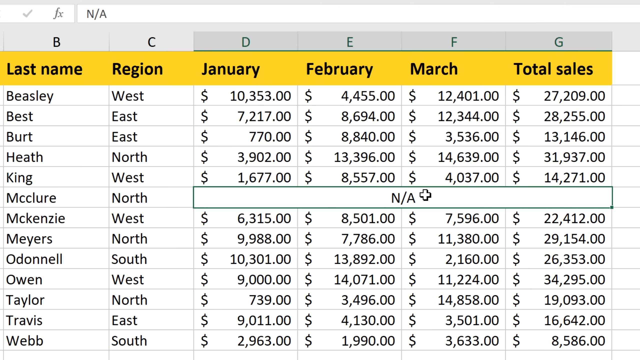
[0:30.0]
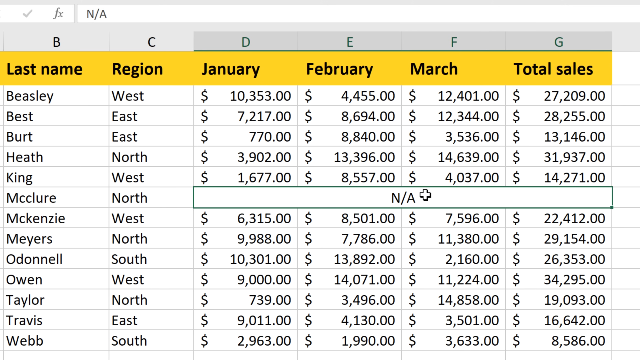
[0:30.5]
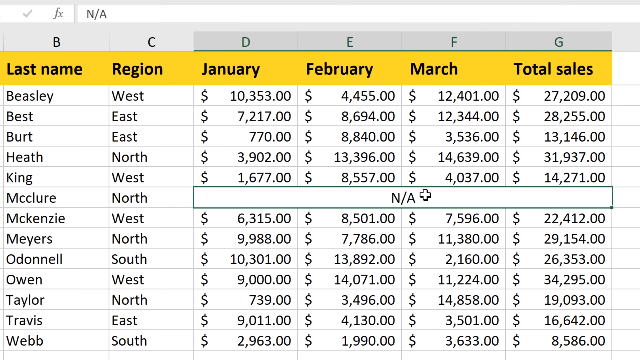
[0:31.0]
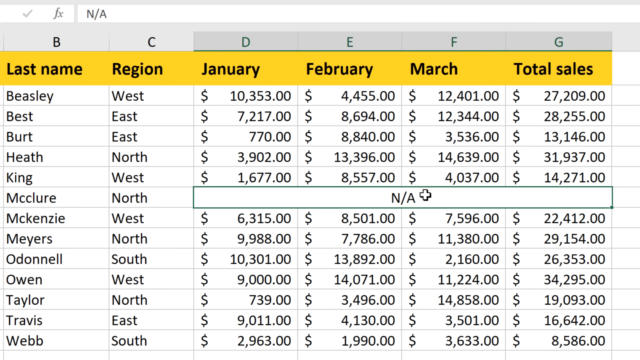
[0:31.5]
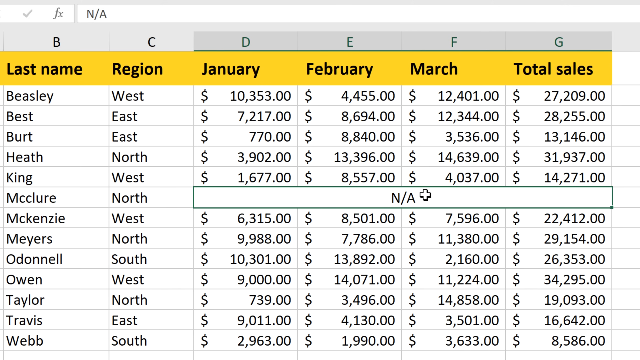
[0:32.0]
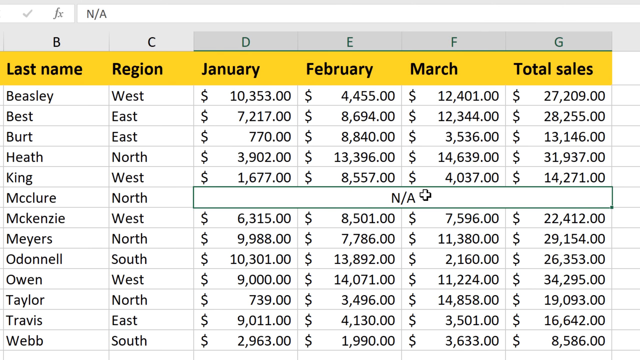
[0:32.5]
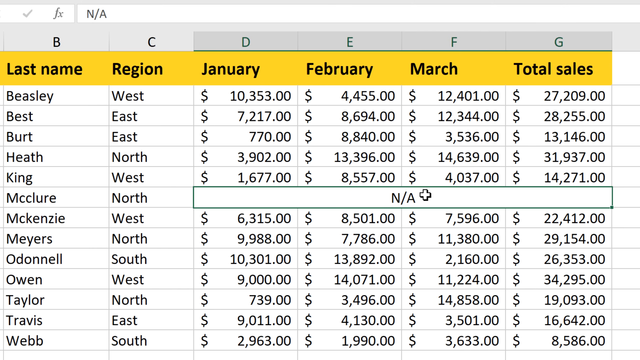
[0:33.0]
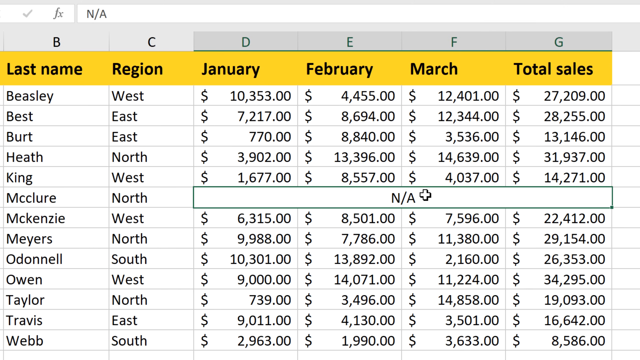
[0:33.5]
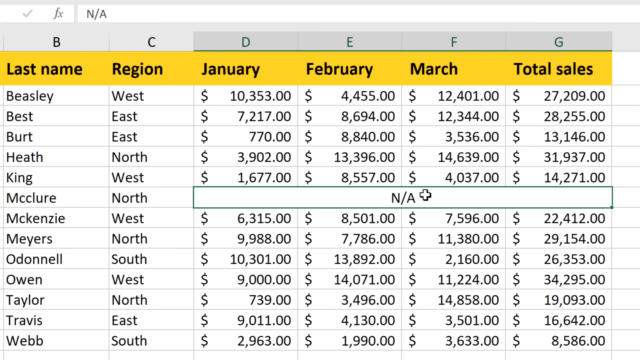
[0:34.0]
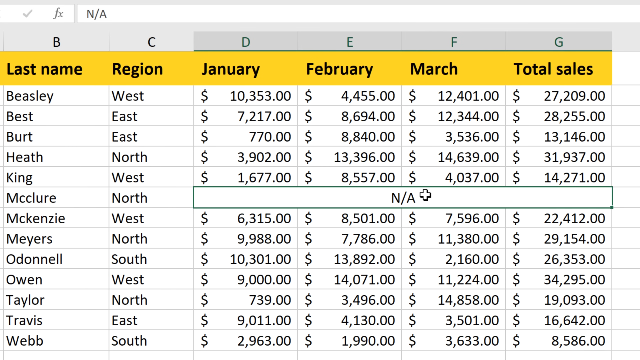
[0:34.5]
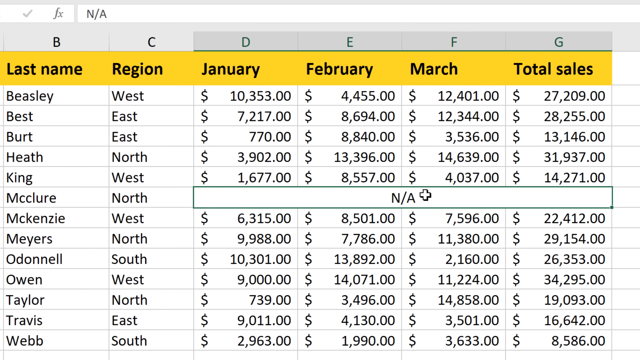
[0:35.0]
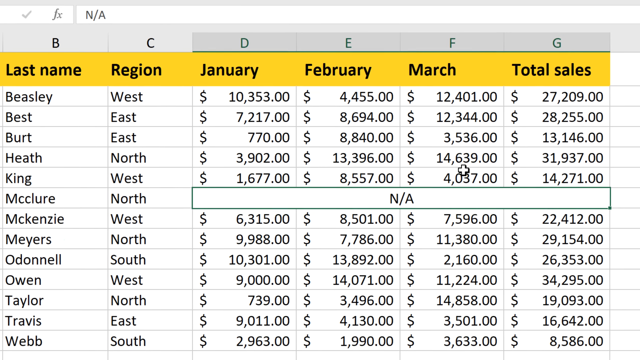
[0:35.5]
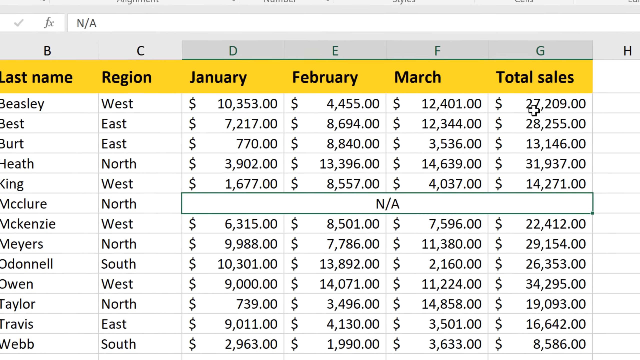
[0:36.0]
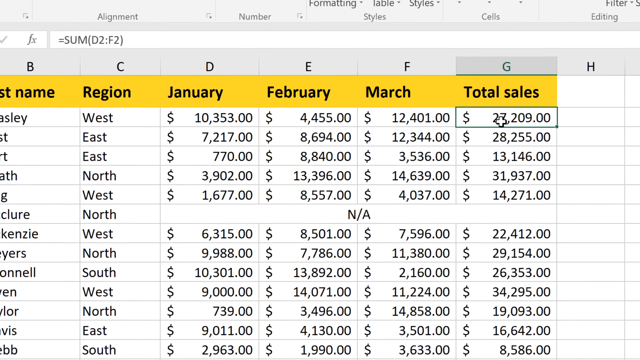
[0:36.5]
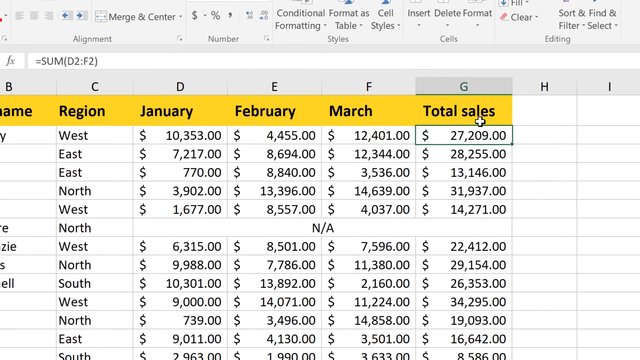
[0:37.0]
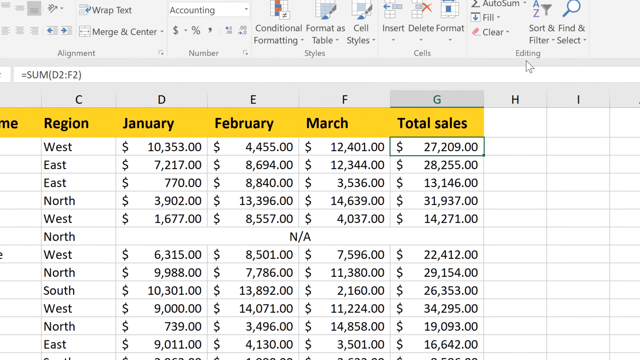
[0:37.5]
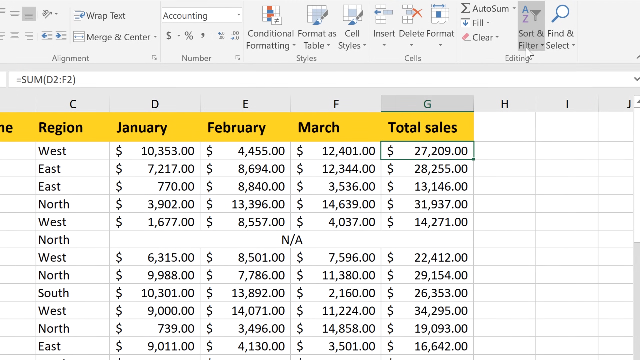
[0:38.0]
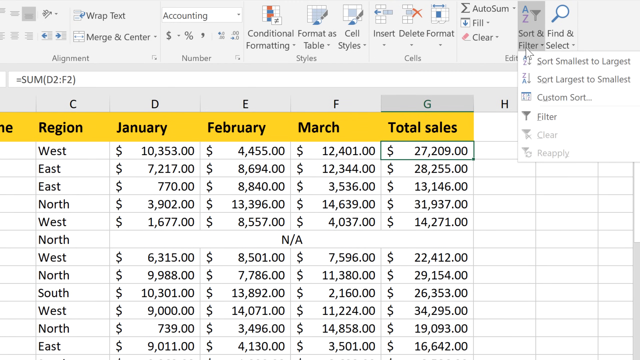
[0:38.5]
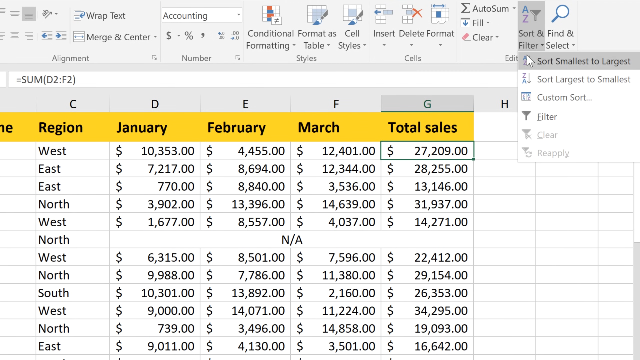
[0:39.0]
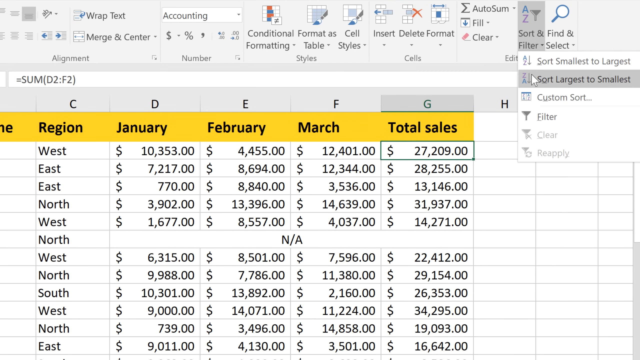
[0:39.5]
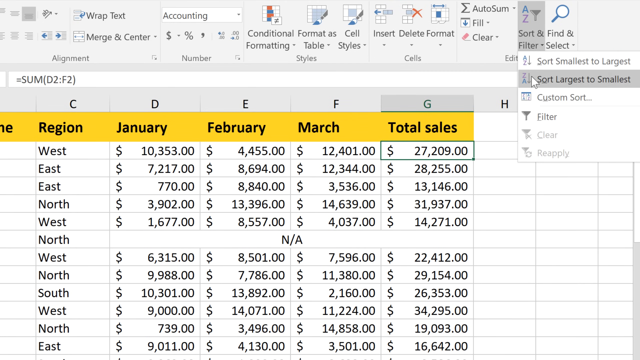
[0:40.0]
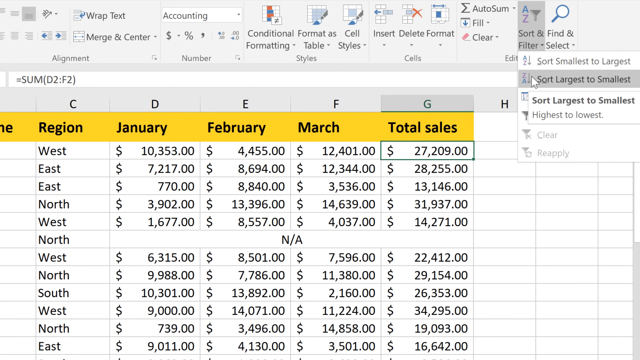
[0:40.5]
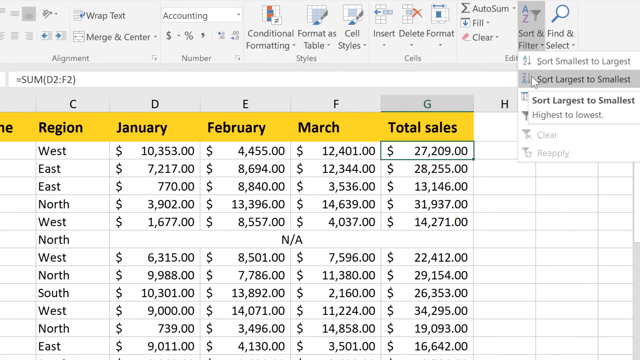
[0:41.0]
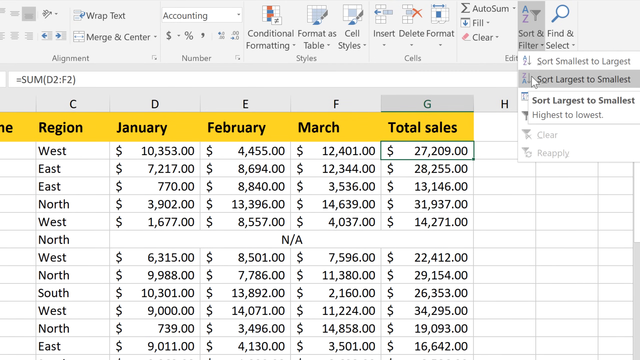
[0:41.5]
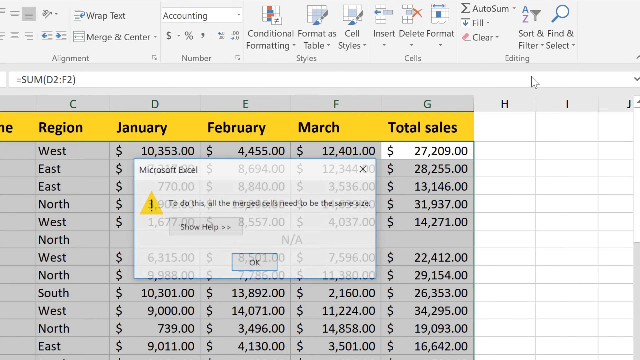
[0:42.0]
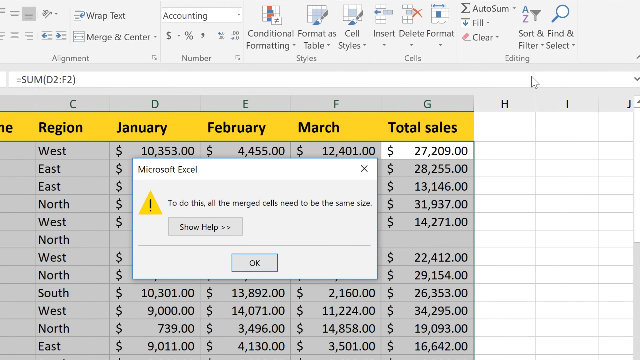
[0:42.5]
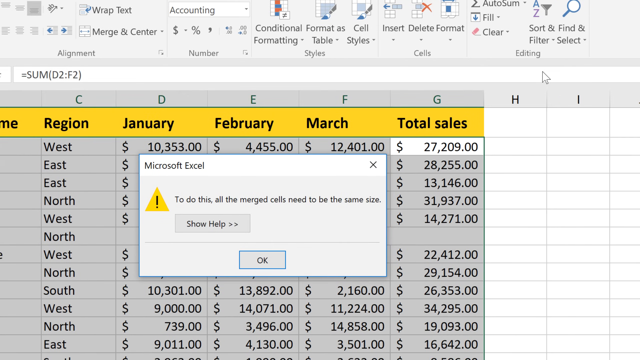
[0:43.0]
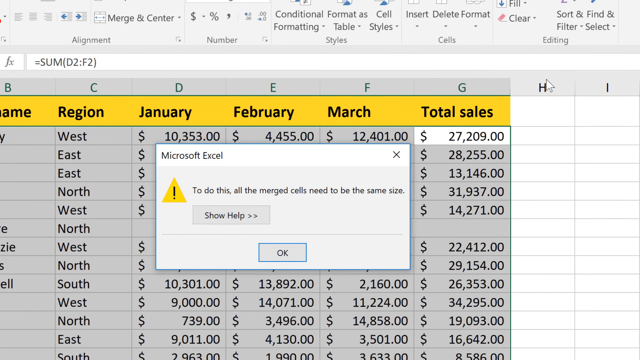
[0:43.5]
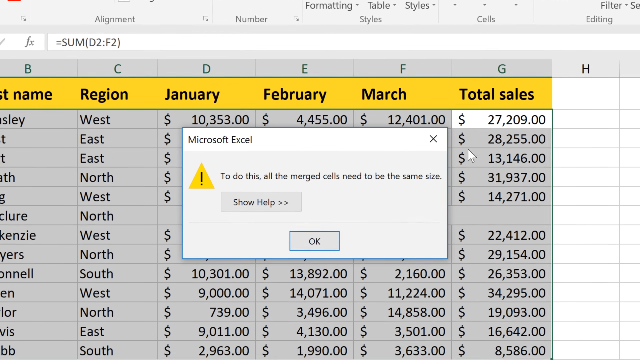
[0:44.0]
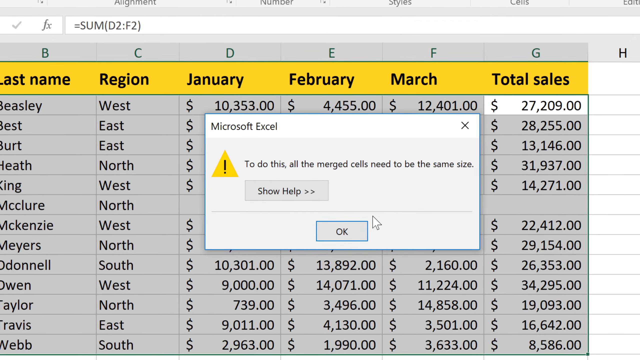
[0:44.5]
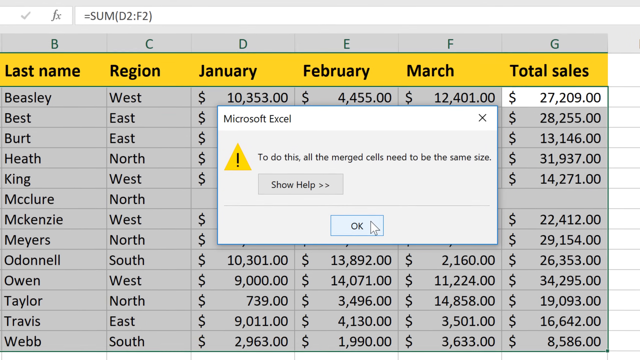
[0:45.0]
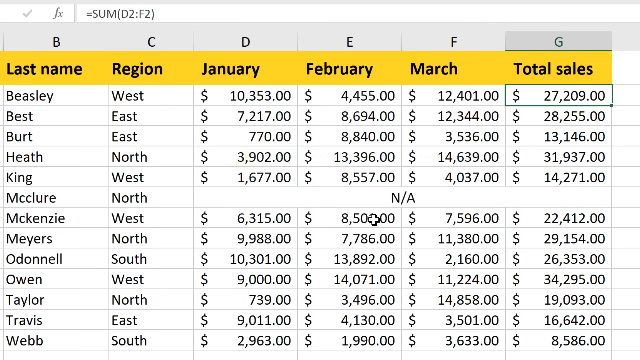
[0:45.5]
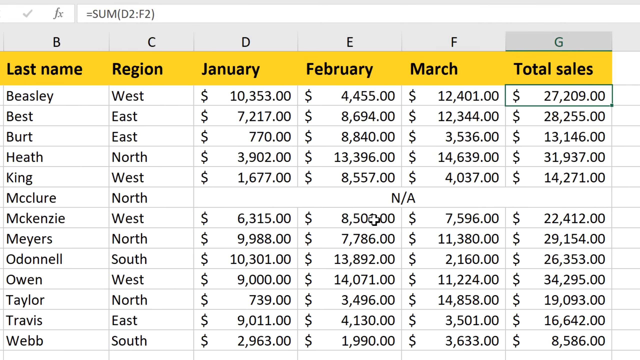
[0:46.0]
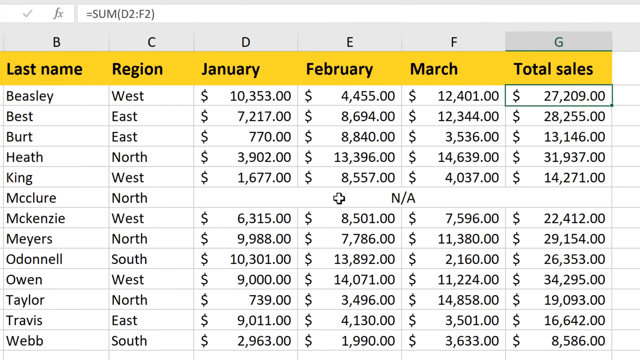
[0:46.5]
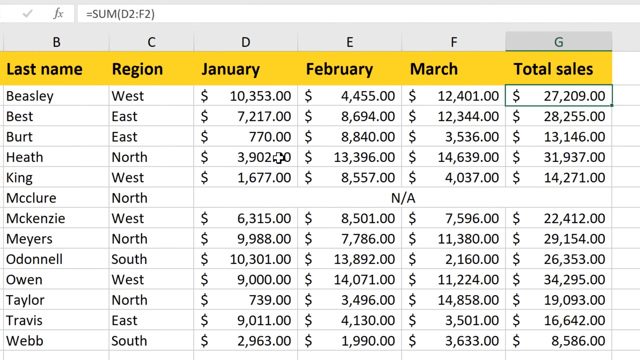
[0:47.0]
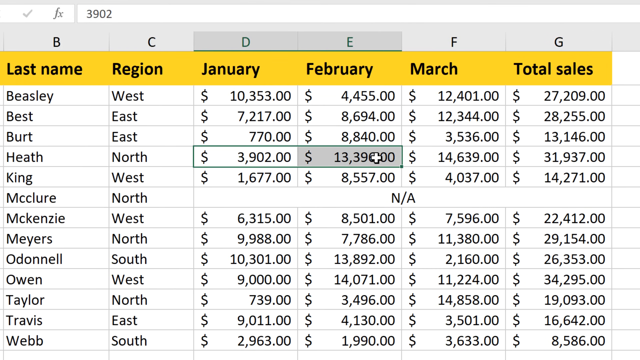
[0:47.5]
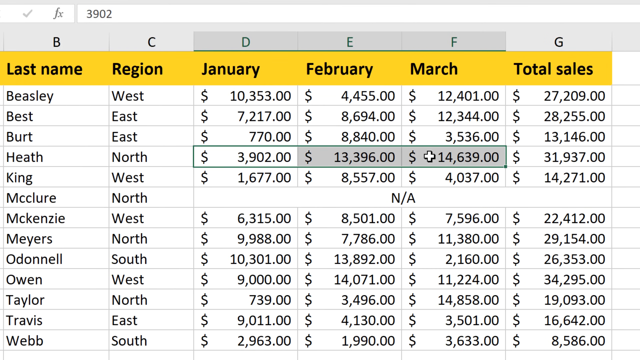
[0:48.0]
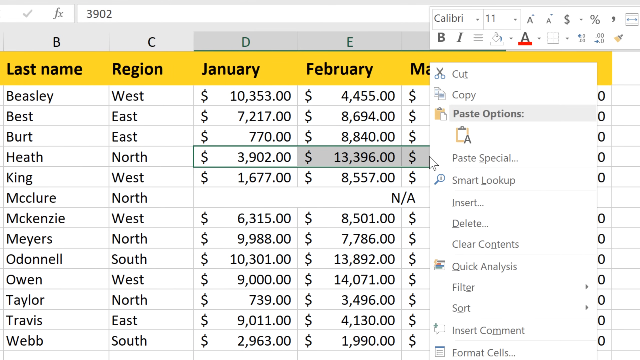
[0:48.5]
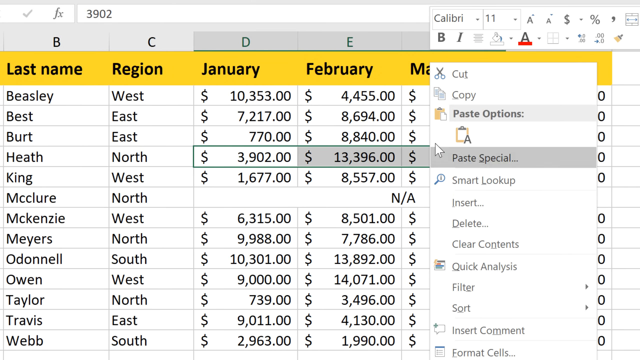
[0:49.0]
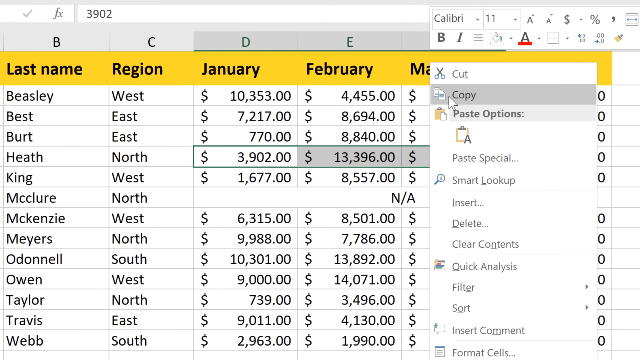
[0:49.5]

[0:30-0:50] The same data table chart shows the last name McClure, whose numerical data has been completely removed; it now just says "NA" with a plus next to it. The cursor goes up to a tool above labeled "sort and filter," and some drop-down selections appear. The user scrolls down to "sort largest to smallest," which pops up a tab with the same name. He clicks on it and a Microsoft Excel message appears: "To do this all the merged cells need to be the same size," with a "show help" button and an "okay" button. The user clicks "okay," then moves the cursor to a column in January, then to February and March, and highlights them.